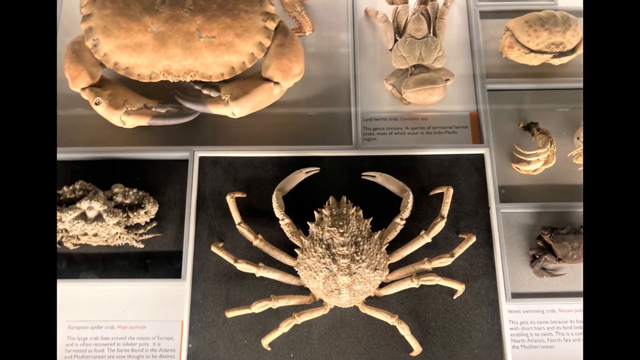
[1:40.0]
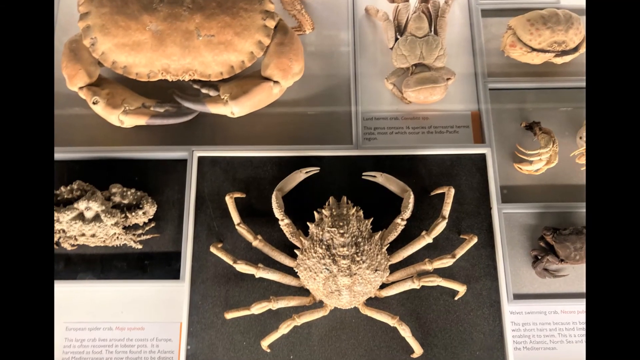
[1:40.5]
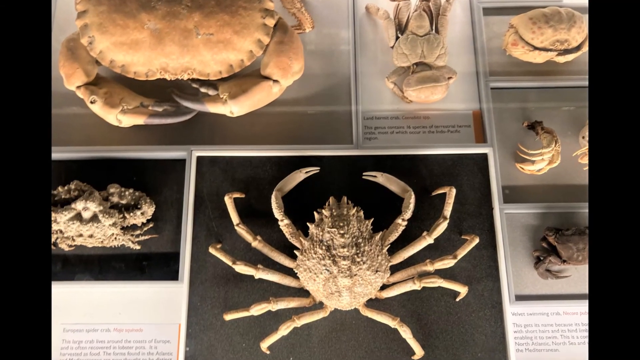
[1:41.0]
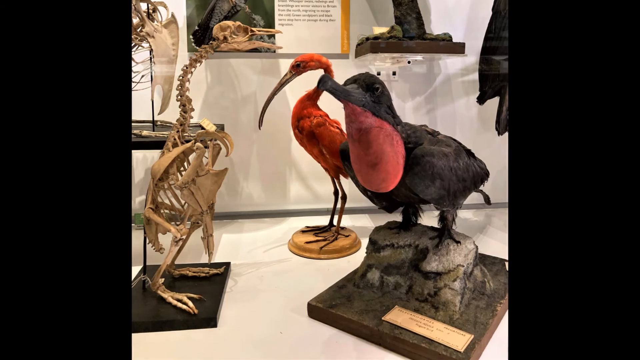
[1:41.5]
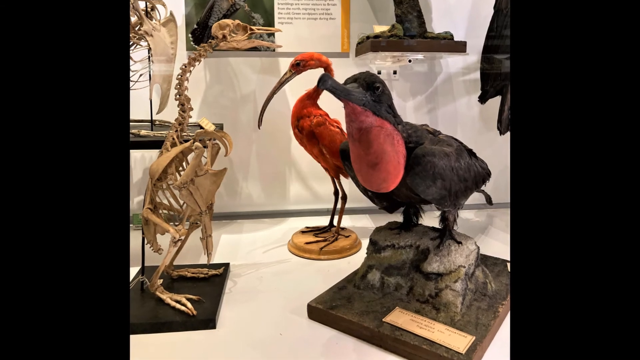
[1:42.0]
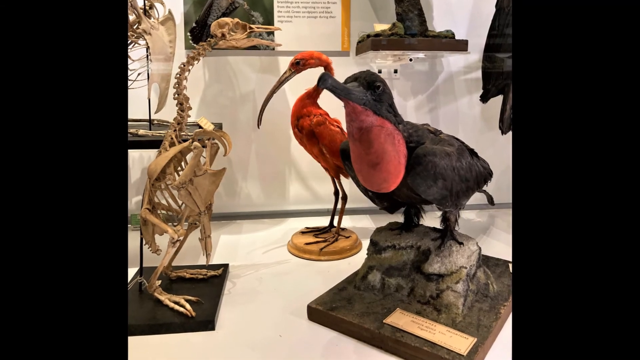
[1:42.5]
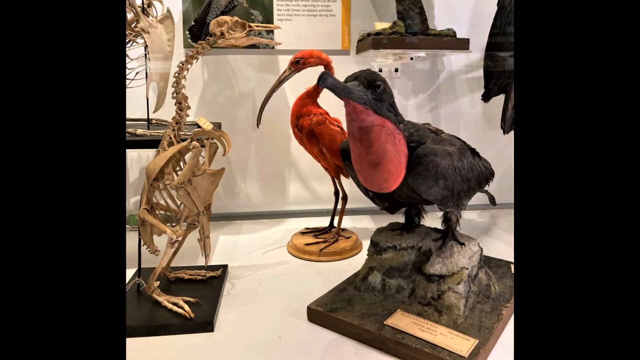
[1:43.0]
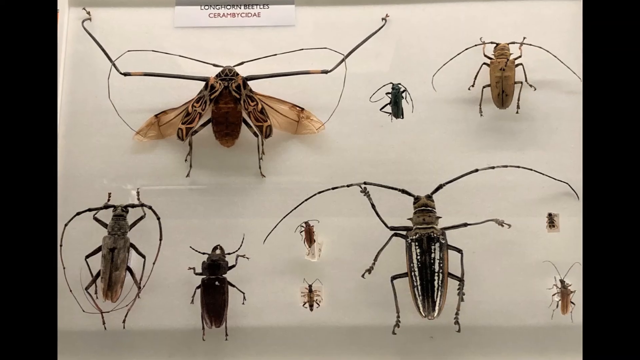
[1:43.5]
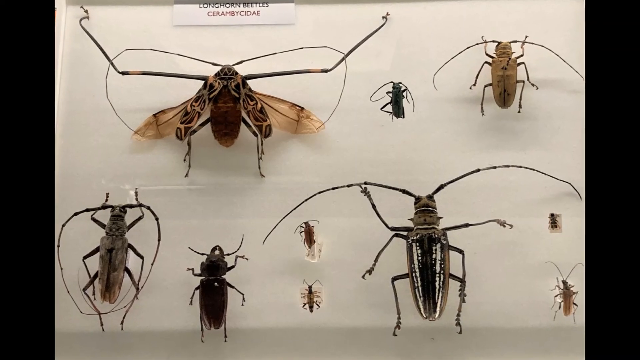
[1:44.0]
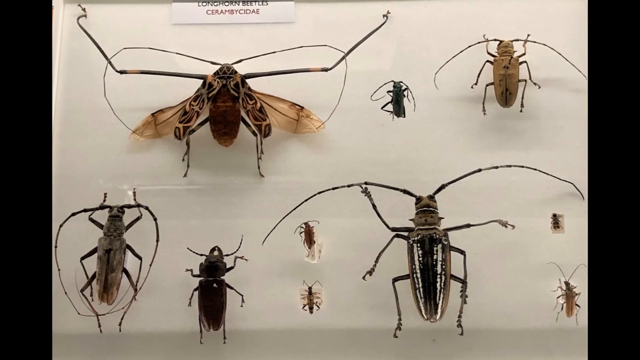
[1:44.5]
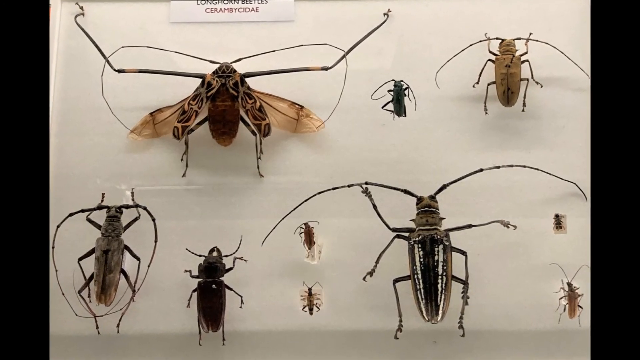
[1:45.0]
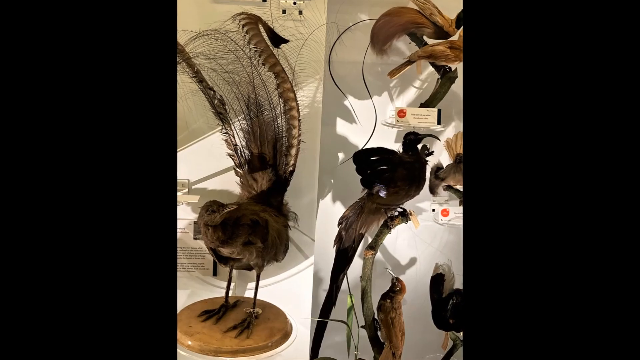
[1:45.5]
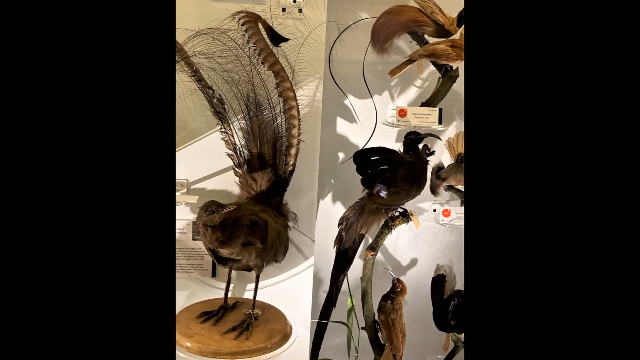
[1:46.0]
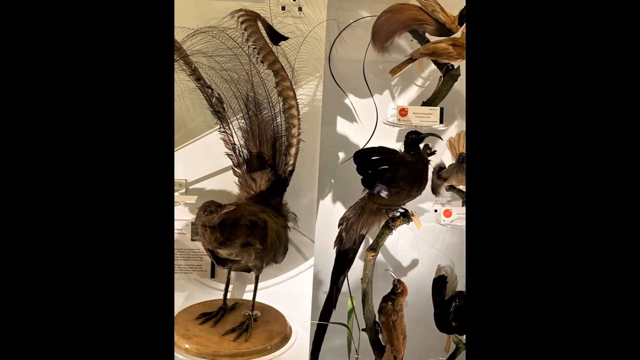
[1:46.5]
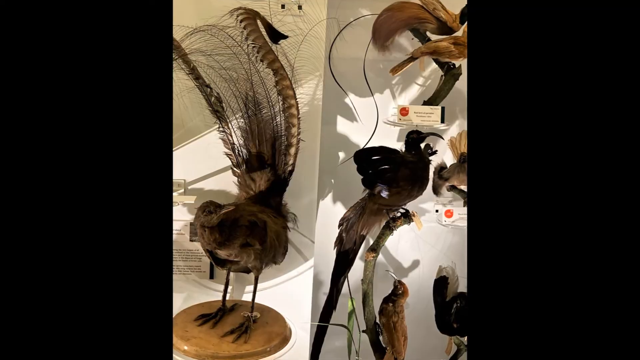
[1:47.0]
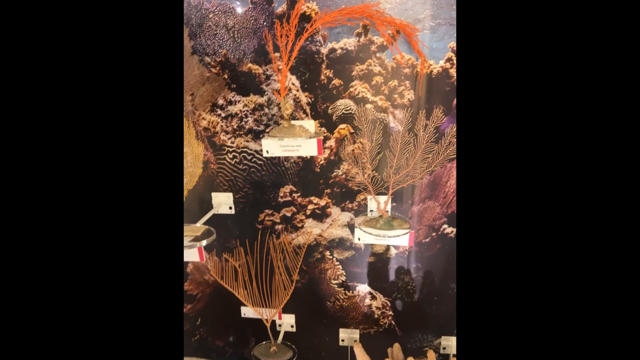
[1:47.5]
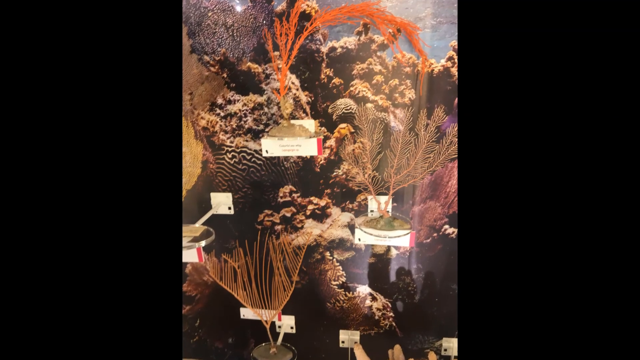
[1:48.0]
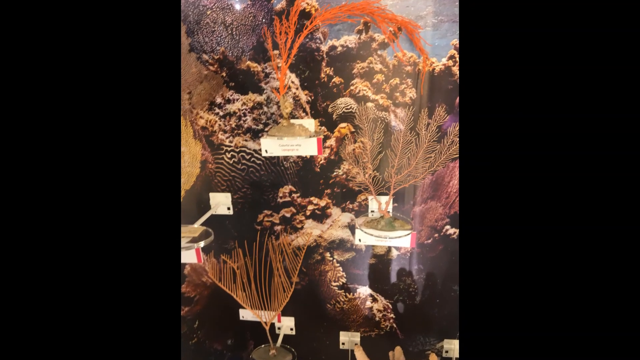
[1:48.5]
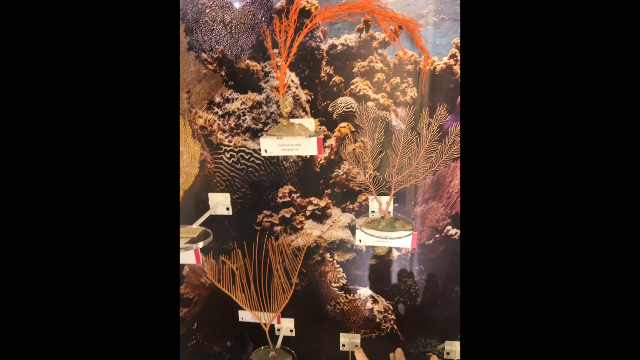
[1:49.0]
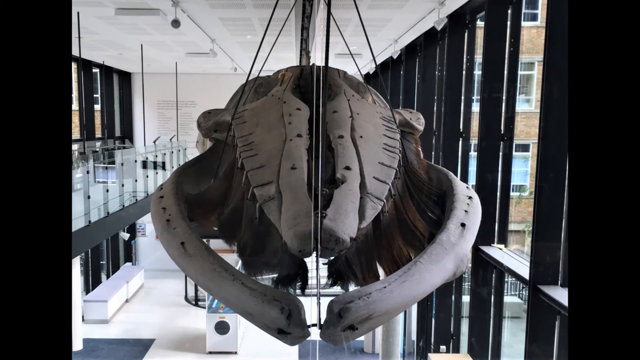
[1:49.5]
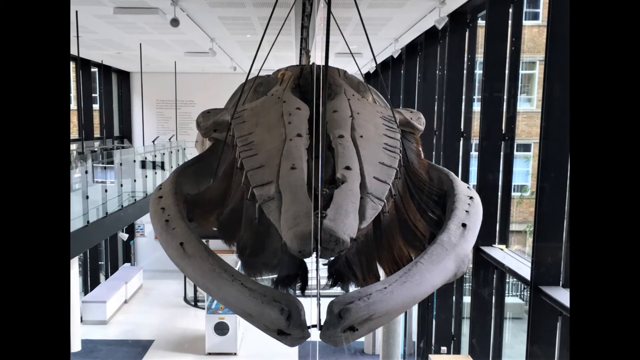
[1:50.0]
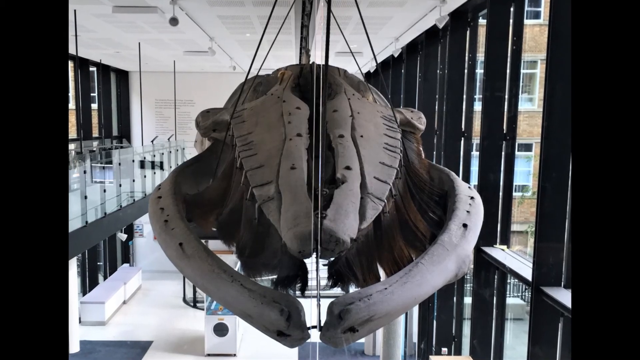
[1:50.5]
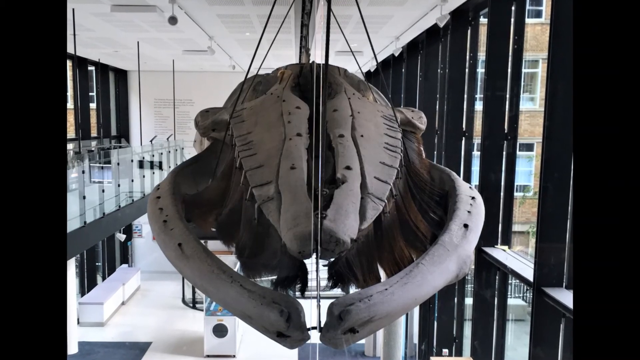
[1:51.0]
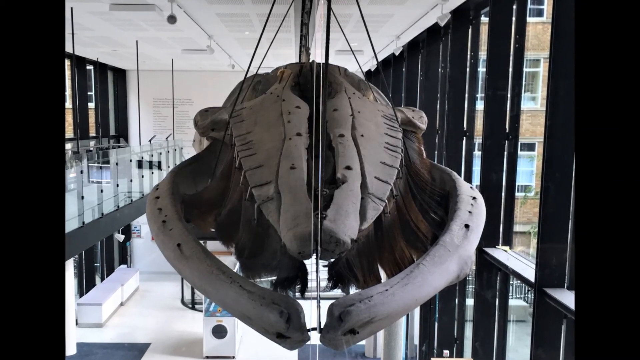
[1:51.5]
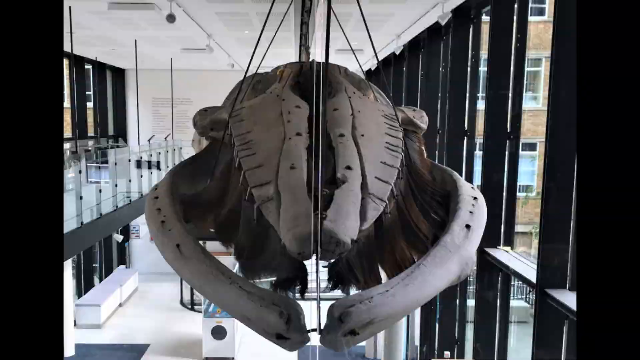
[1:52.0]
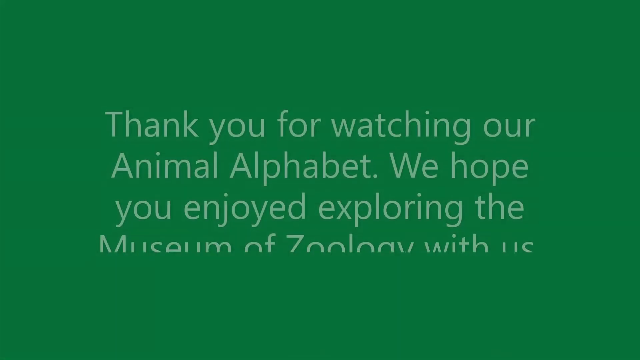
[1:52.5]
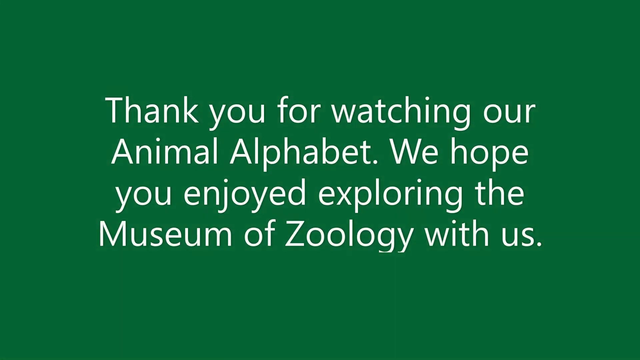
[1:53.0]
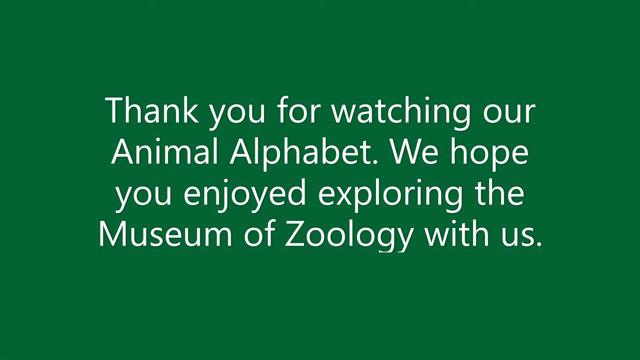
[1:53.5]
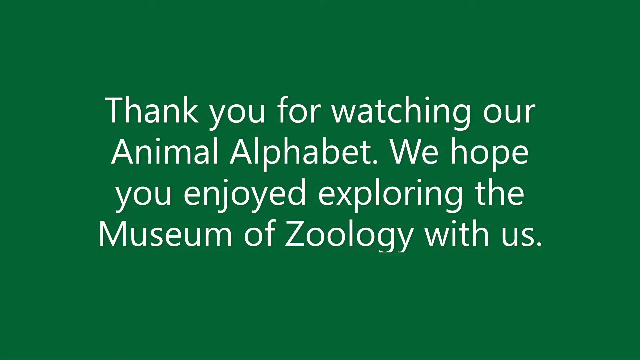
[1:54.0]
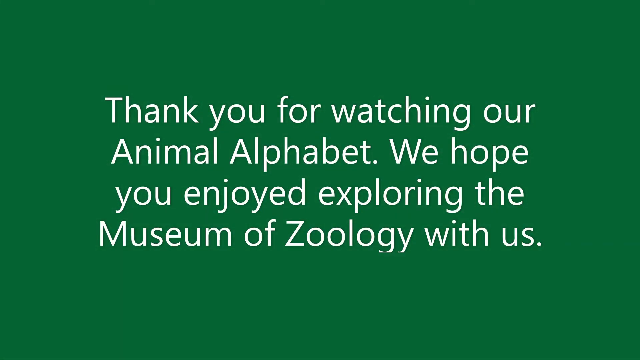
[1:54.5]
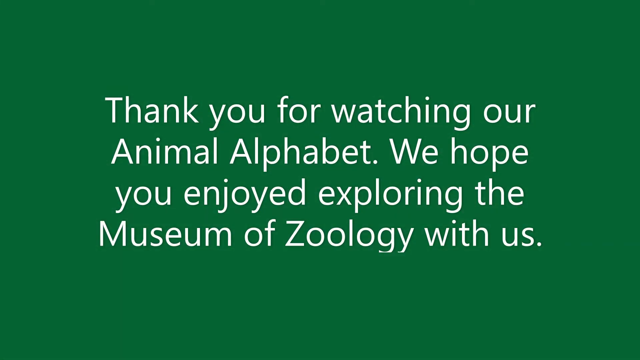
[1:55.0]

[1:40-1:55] Different items in the zoo are shown, including skeletons of clams and crabs. One screen has four pictures, two on top and two on the bottom, plus three stacked on top of each other on the right side. The next scene shows more items, including statues of different types of birds from long ago; one black bird with a reddish part on its breast is closest to the front on the right. Then a screen with an all-white background shows 10 bugs with antennae, some with wings and some without, some with long antennae. Next come different exhibits: underwater exhibits, things hanging from the ceiling and different bones. Finally, white words on a dark green background read "thank you for watching our animal alphabet, we hope you enjoyed exploring the Museum of Zoology with us."